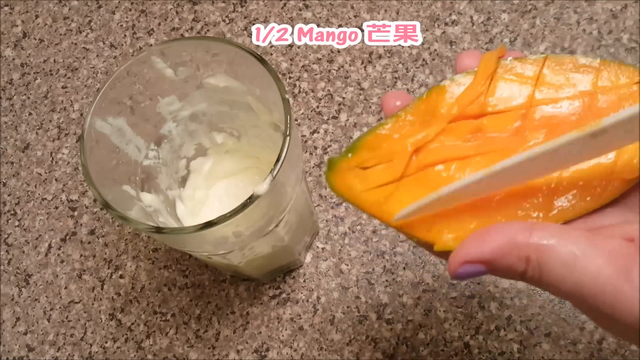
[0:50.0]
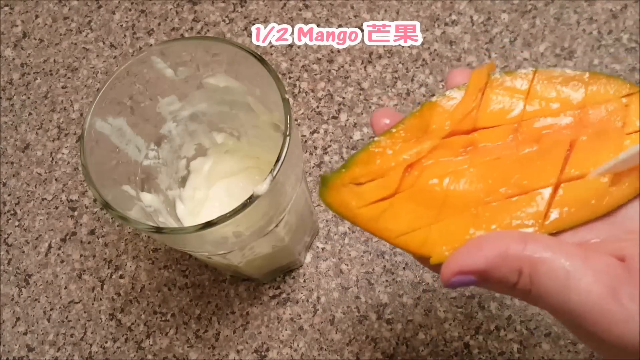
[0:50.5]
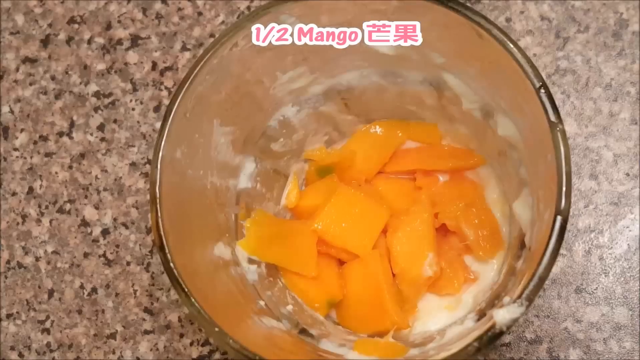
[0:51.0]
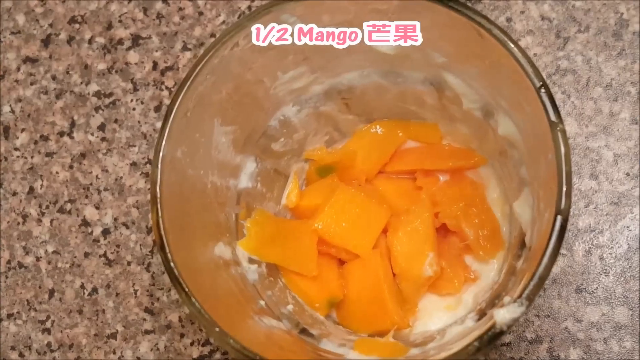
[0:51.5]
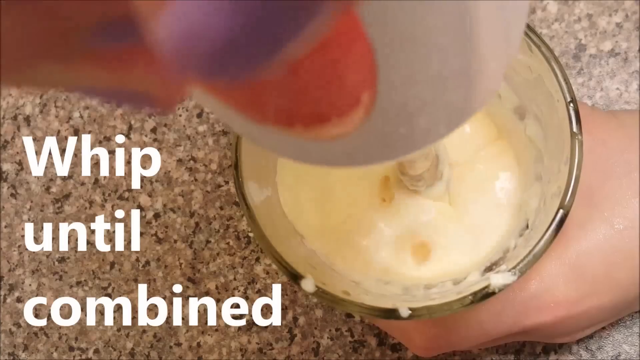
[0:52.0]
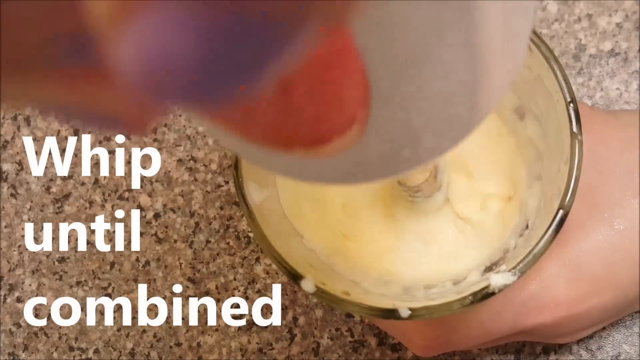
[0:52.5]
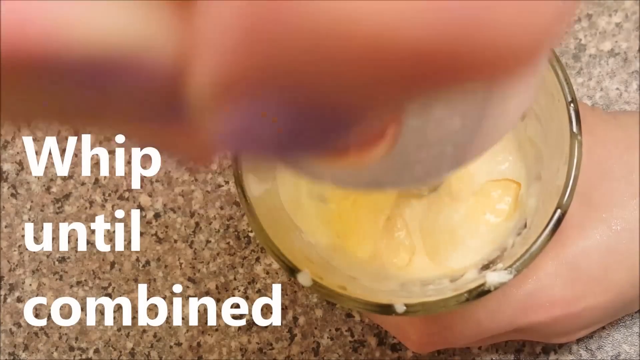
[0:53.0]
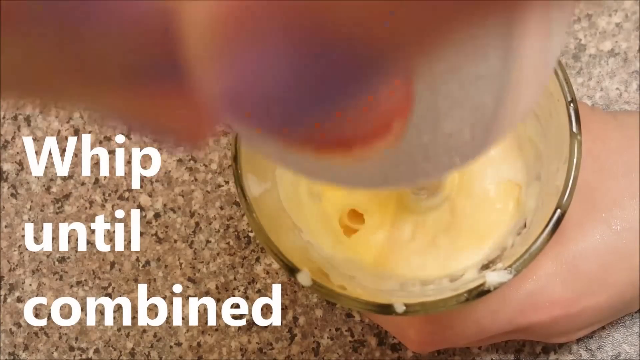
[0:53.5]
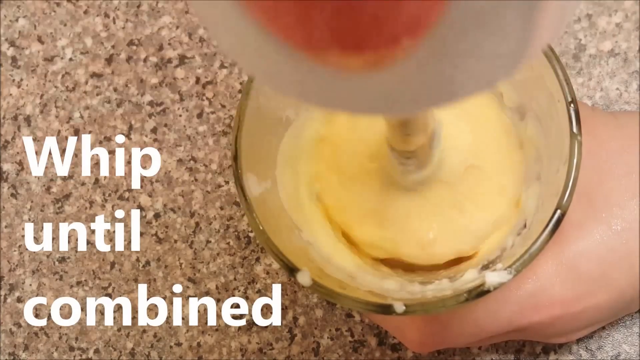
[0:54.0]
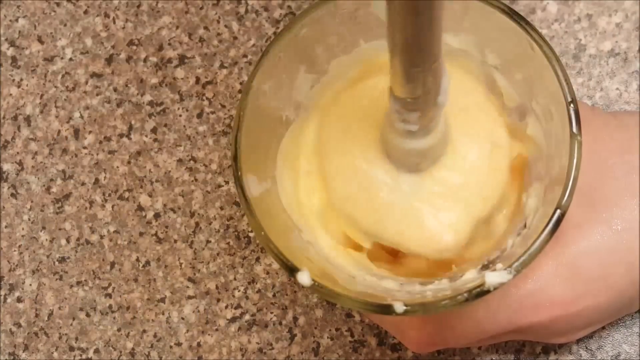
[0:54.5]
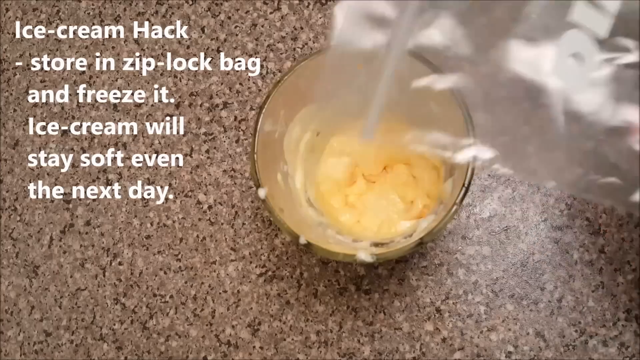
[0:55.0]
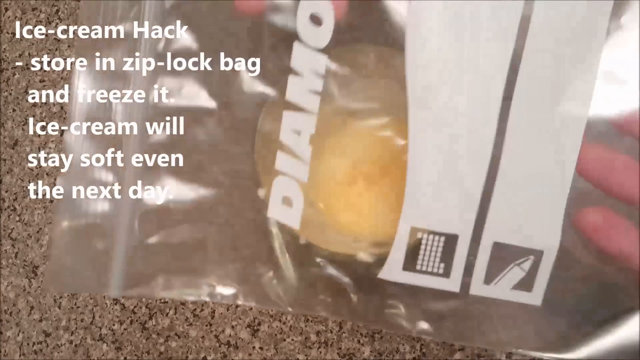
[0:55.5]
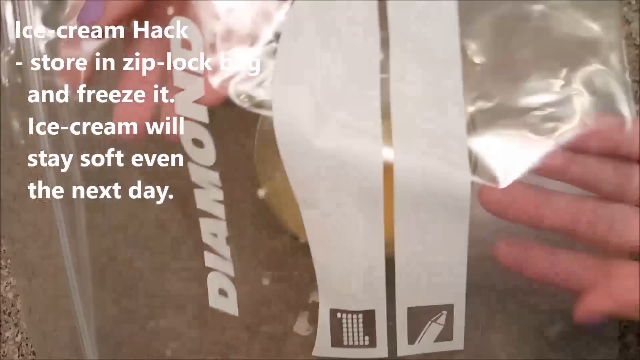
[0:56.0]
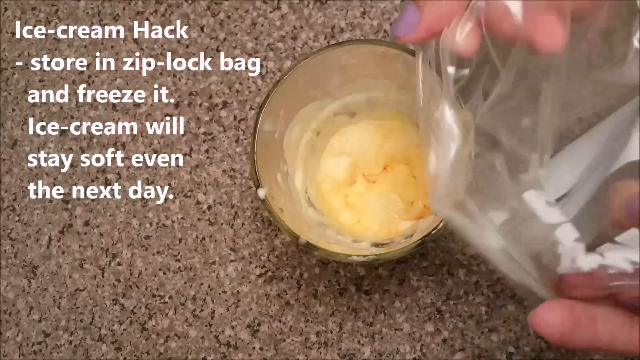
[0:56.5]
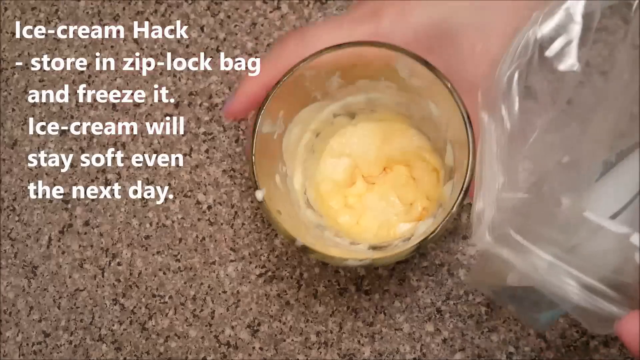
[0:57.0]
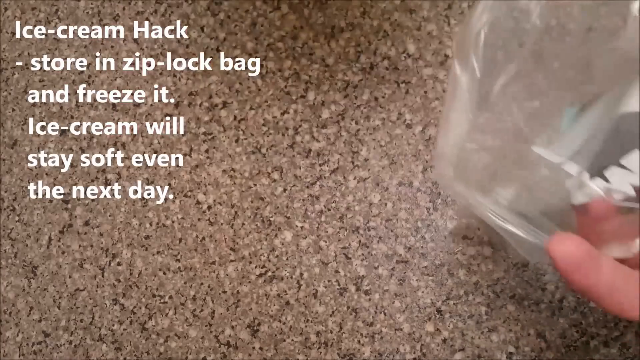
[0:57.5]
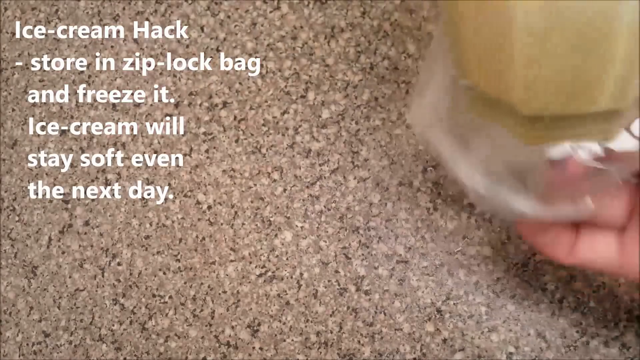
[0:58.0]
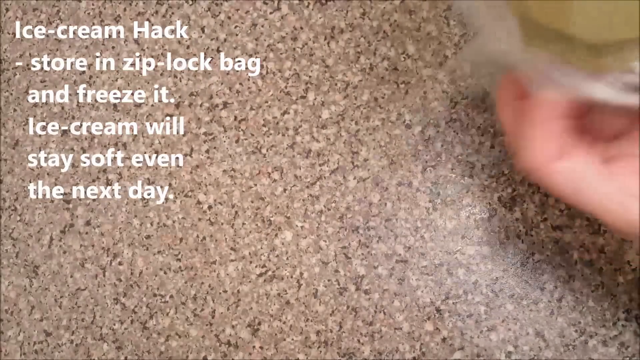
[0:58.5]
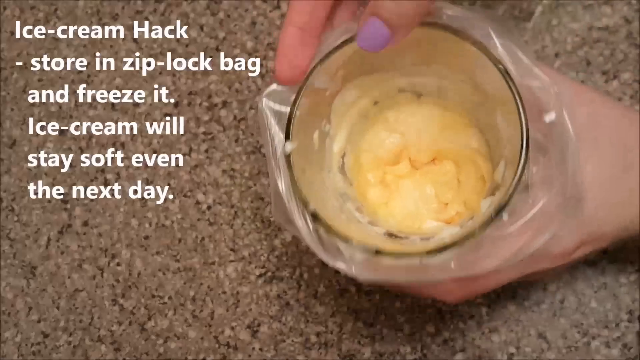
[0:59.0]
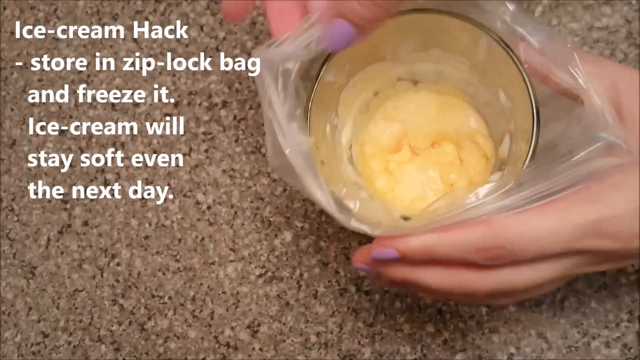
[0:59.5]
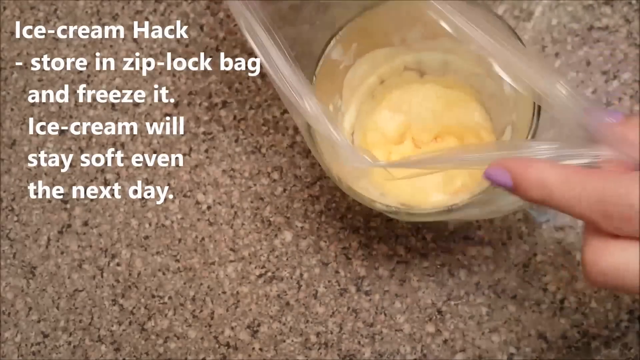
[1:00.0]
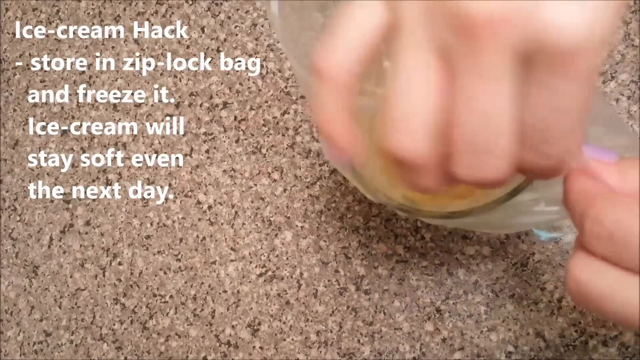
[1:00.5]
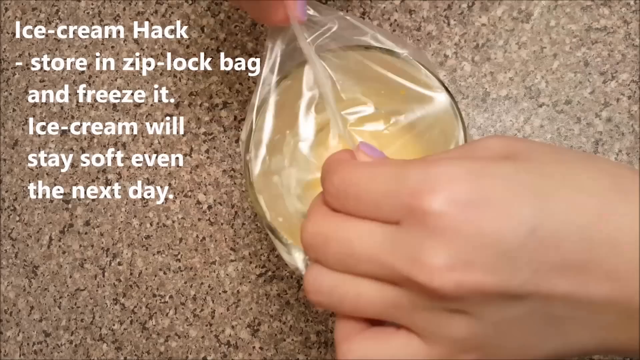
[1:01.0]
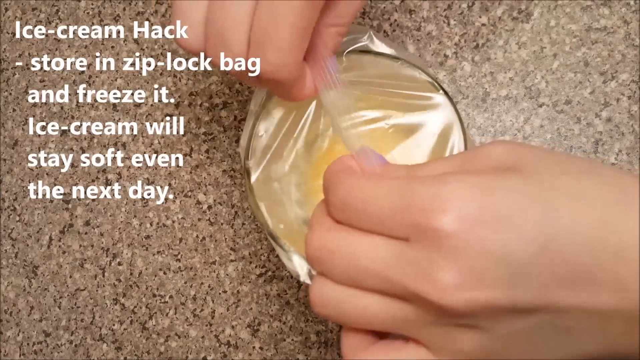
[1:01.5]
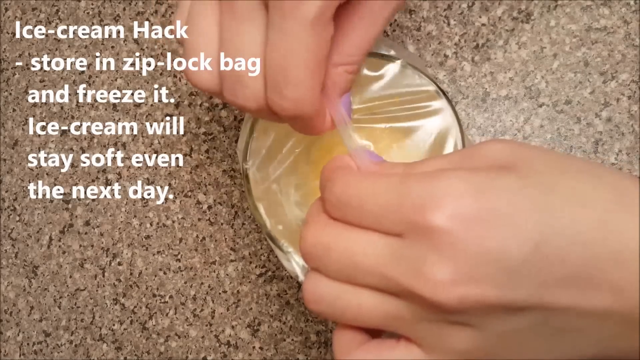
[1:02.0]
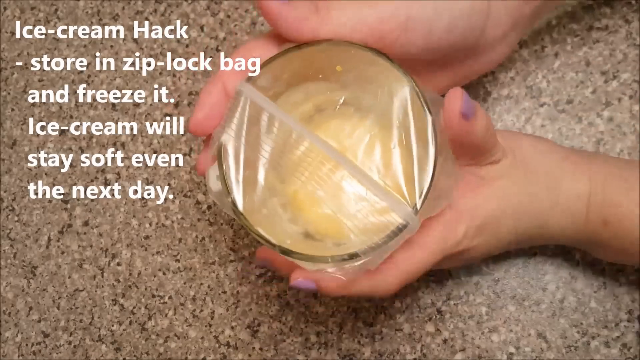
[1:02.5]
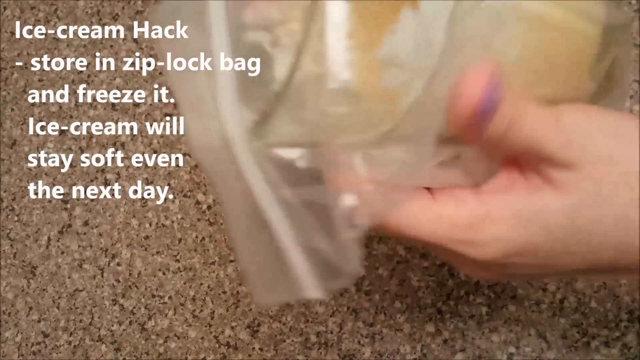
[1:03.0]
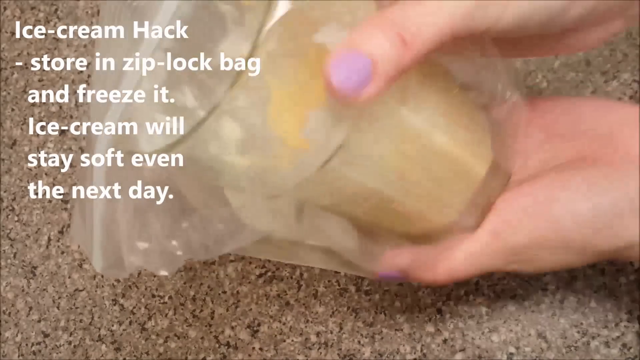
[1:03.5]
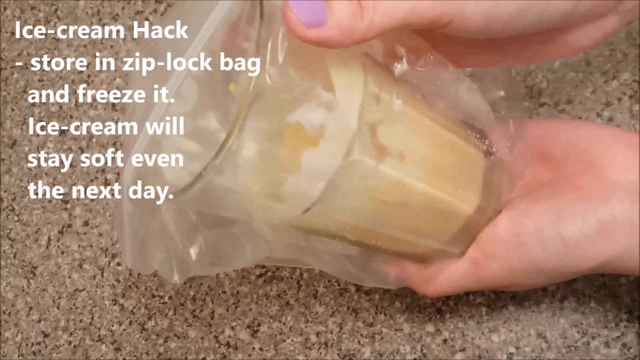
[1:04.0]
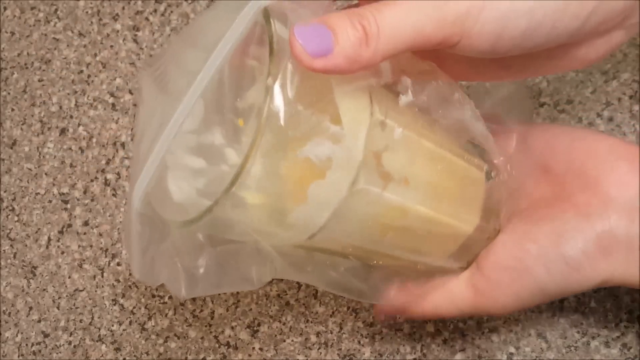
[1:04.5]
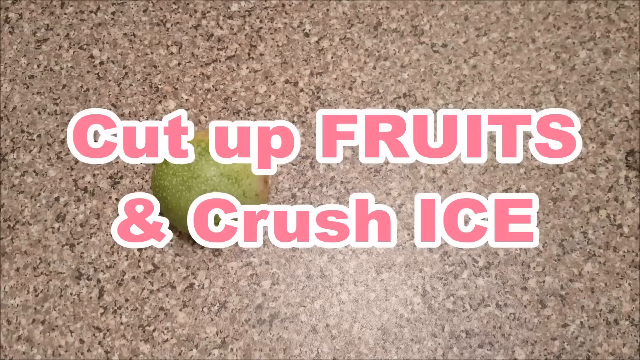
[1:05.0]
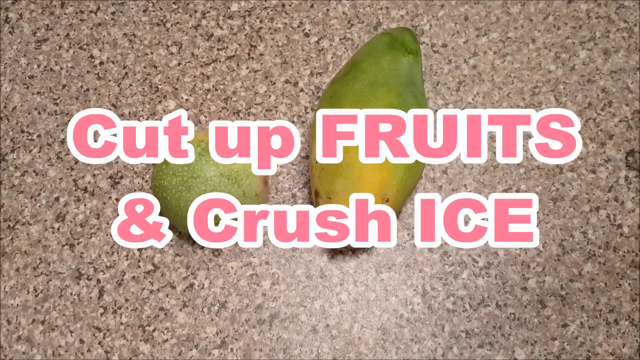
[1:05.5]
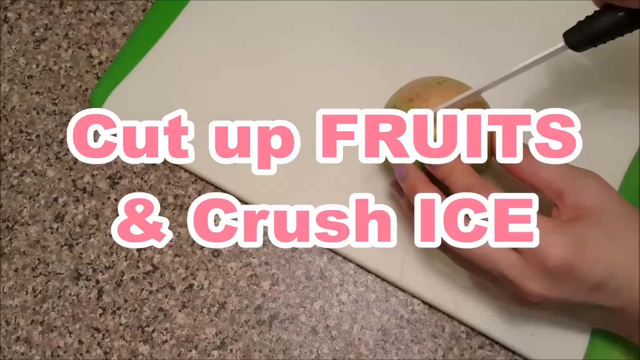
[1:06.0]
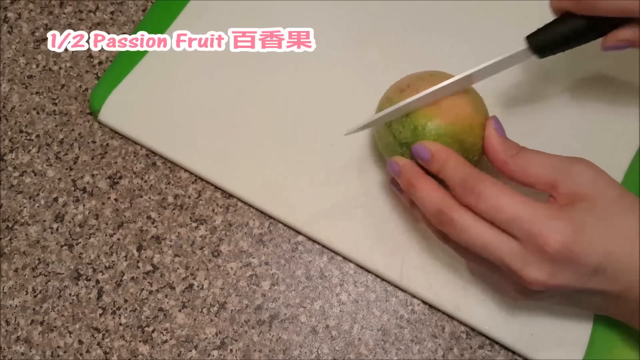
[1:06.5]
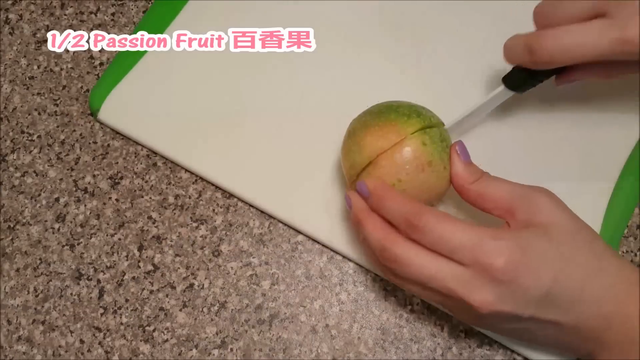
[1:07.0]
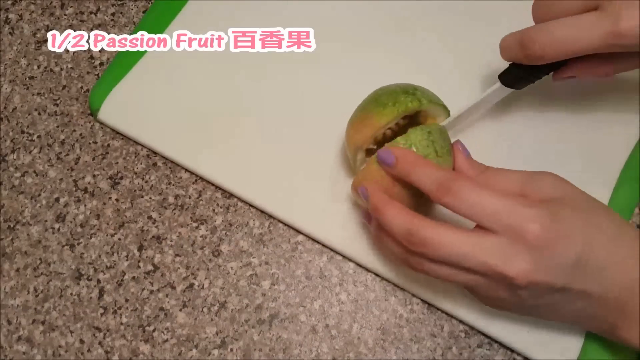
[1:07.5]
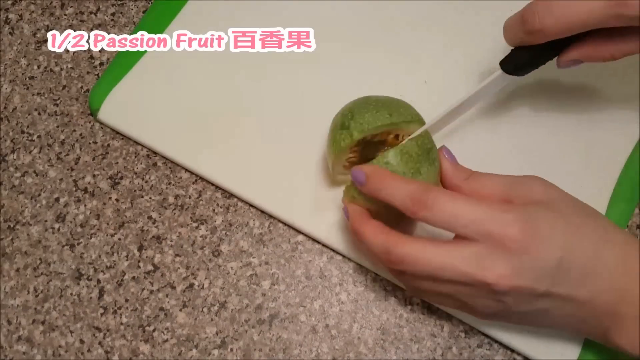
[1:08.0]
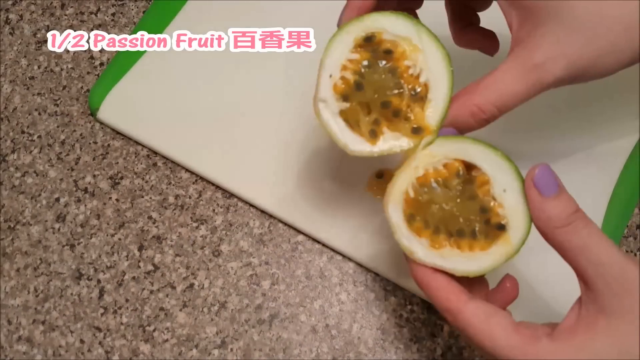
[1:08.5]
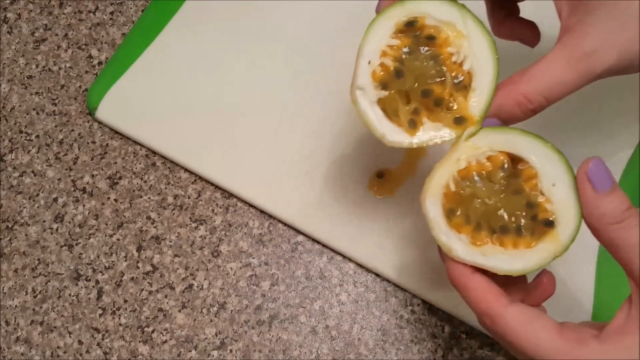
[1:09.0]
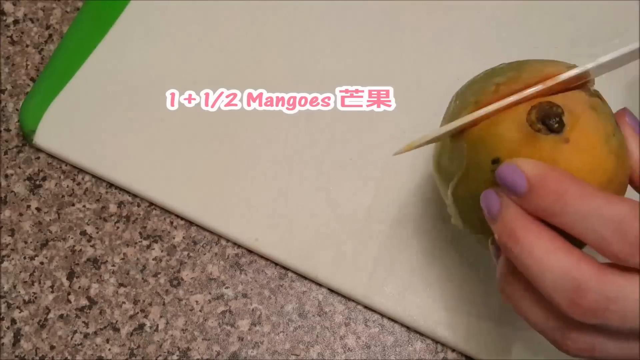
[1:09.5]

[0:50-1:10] The person cuts half a mango into roughly cube shapes and adds the mango cubes to the whipping cream. Text says "whip until combined", highlighting the mango whipping cream. Text then reads "ice cream hack store in a ziplock bag and freeze it. The ice cream will stay soft even the next day." The person puts the ice cream, which is in a thick glass cup, into the freezer. The screen then transitions to cutting the fruit for toppings, including half a passion fruit and 1 1/2 mangoes, with the fruit being cut on a marble countertop with a patterned tile look.